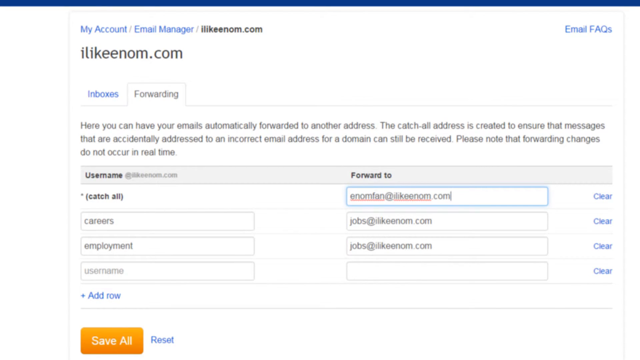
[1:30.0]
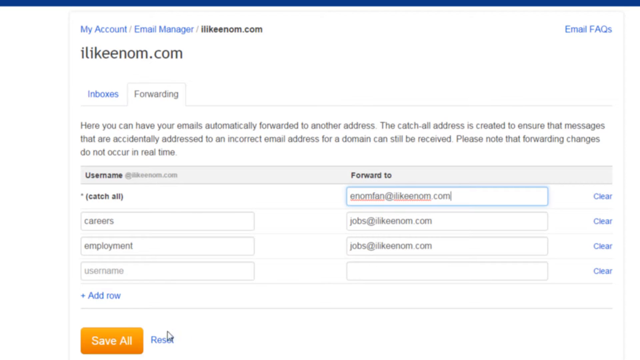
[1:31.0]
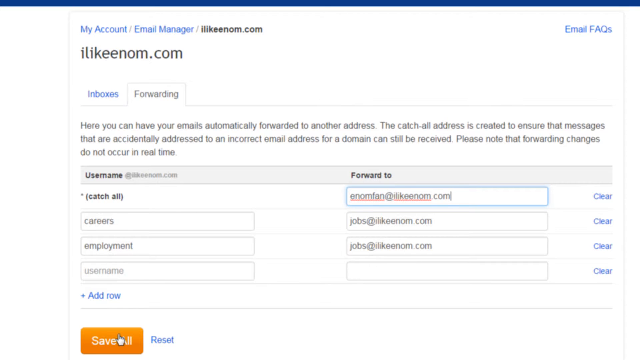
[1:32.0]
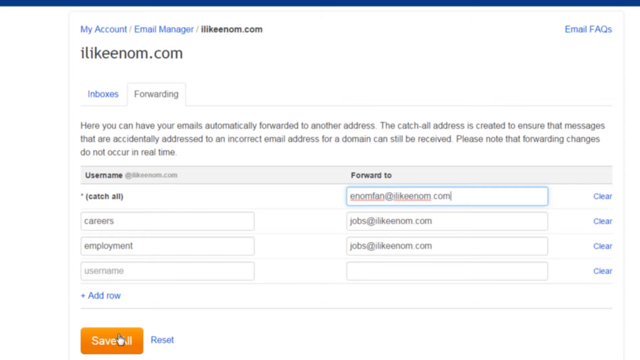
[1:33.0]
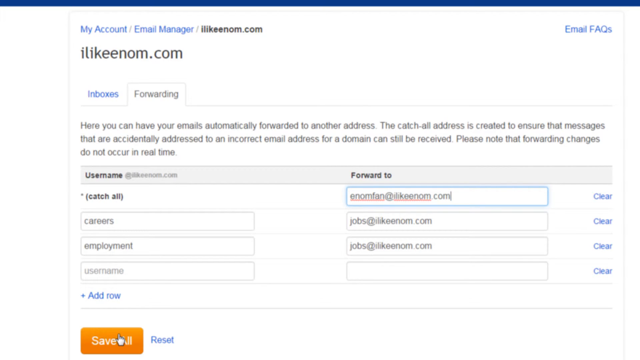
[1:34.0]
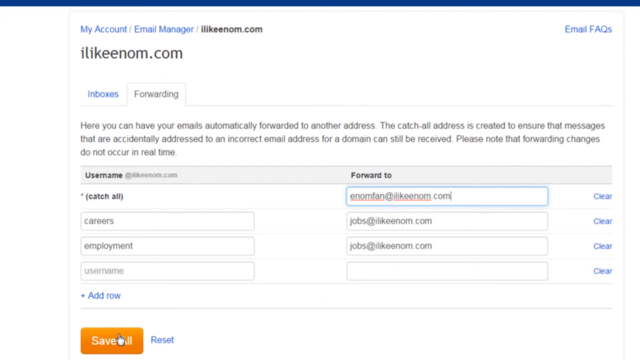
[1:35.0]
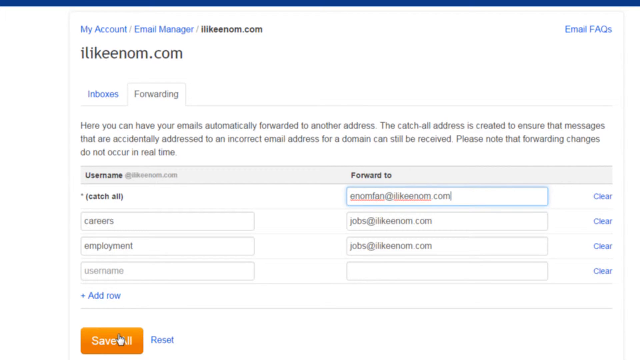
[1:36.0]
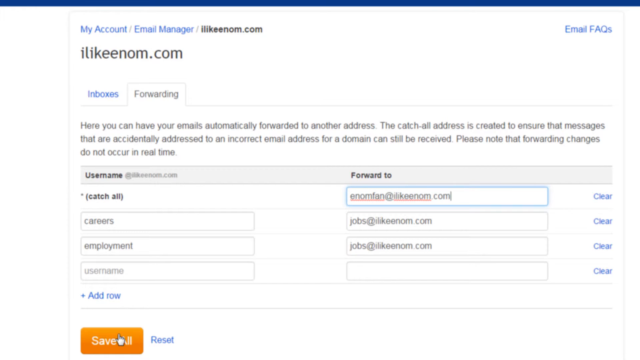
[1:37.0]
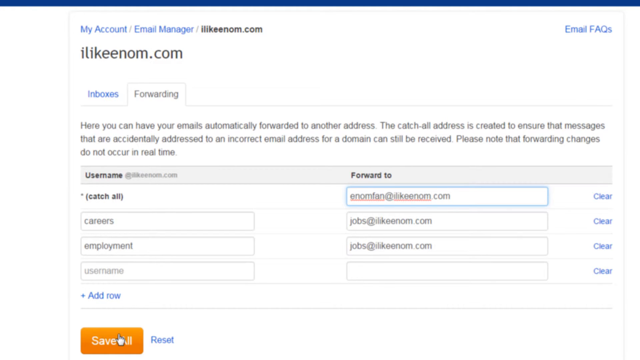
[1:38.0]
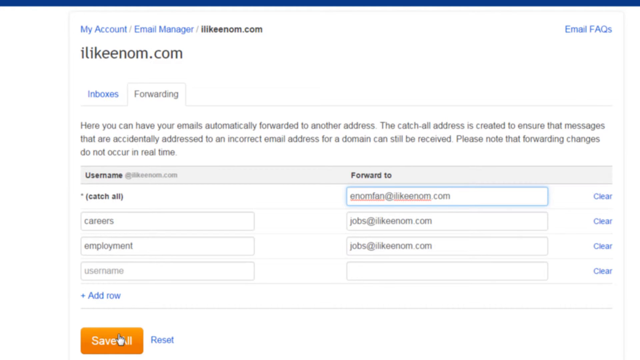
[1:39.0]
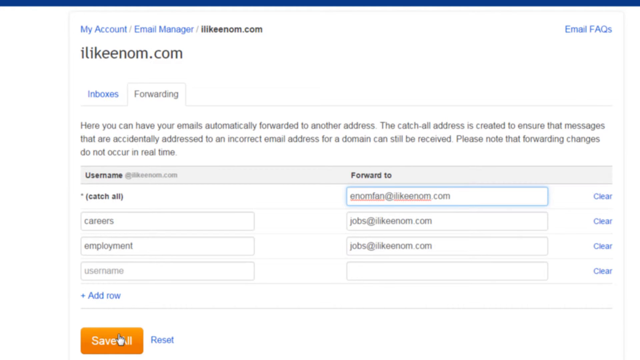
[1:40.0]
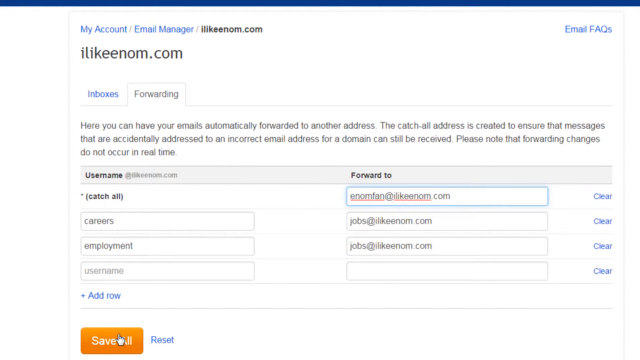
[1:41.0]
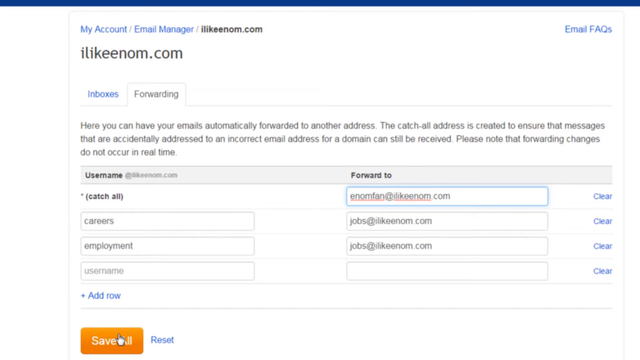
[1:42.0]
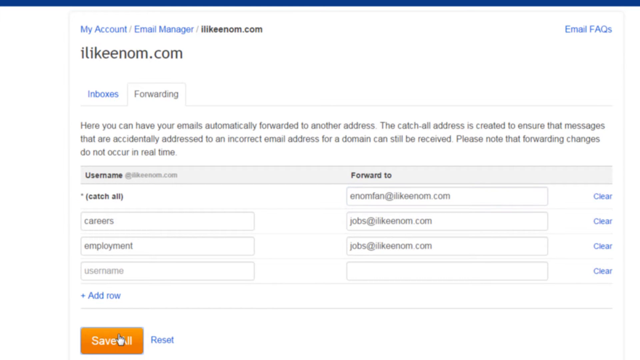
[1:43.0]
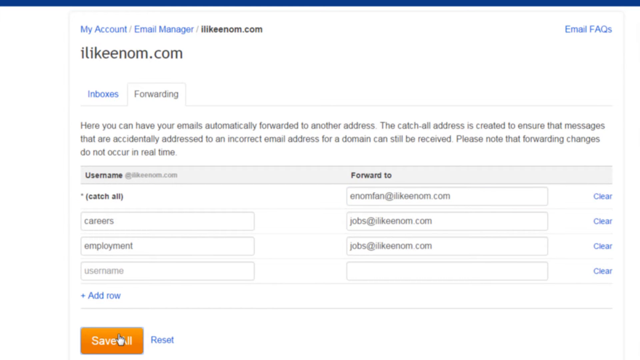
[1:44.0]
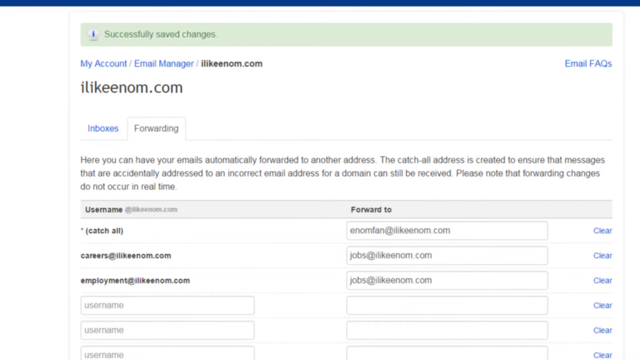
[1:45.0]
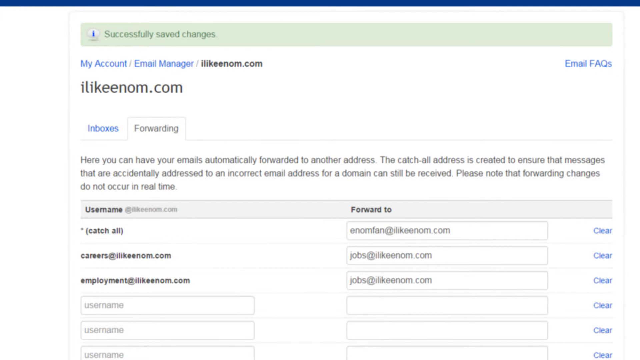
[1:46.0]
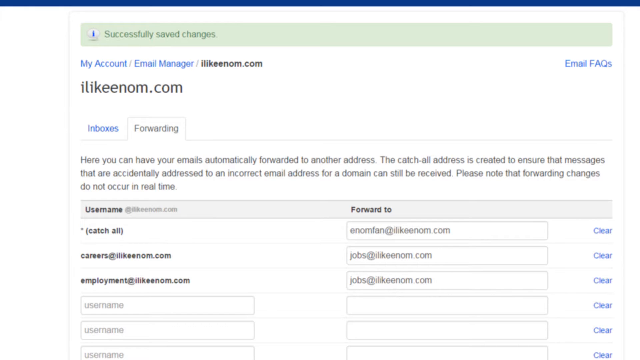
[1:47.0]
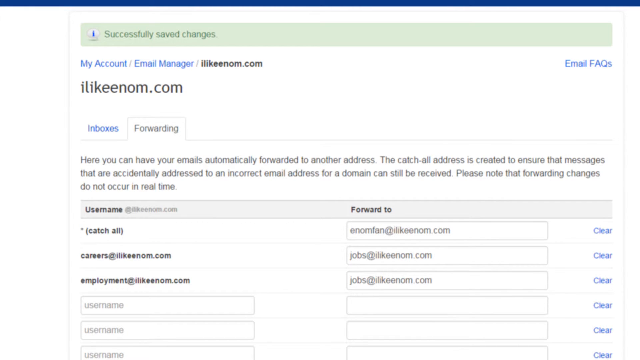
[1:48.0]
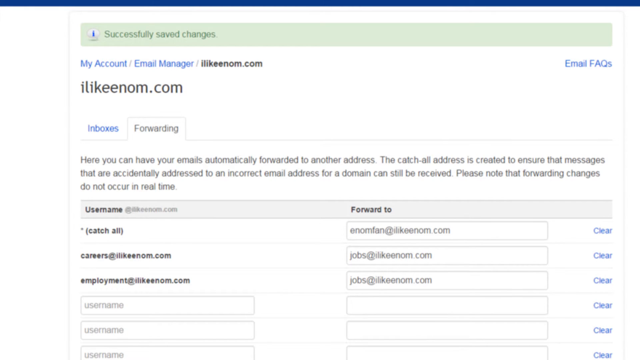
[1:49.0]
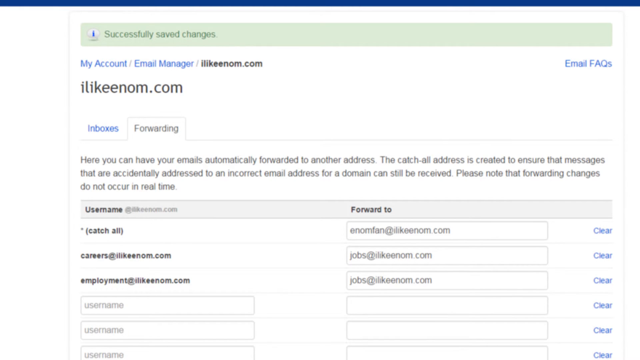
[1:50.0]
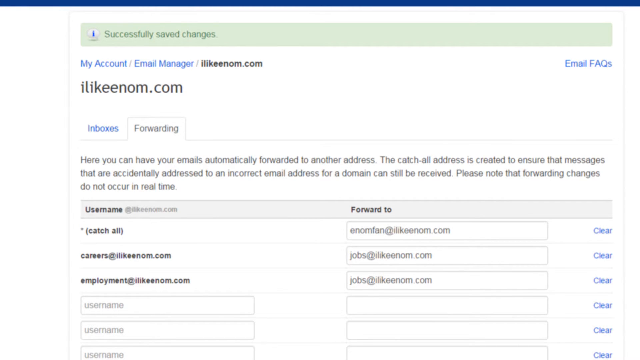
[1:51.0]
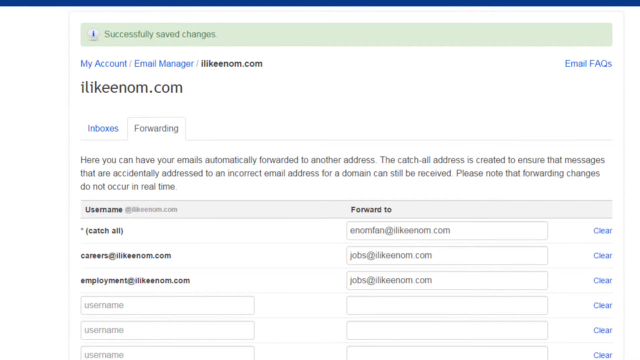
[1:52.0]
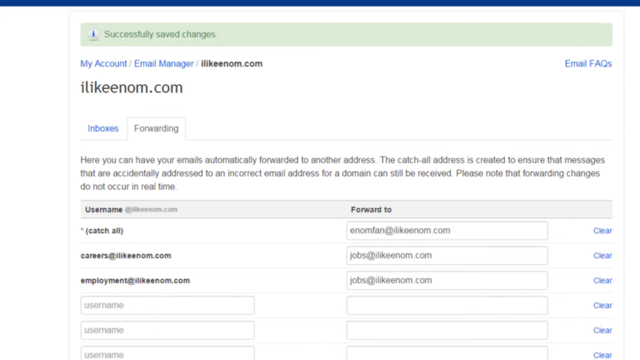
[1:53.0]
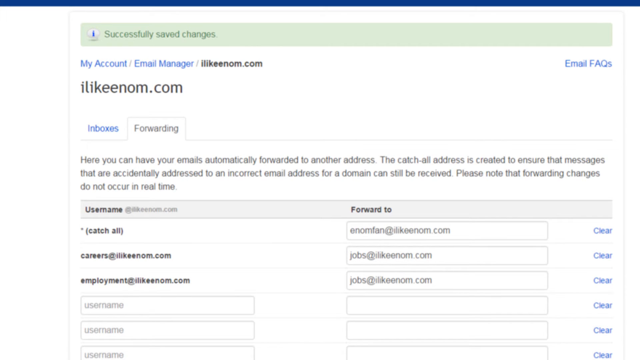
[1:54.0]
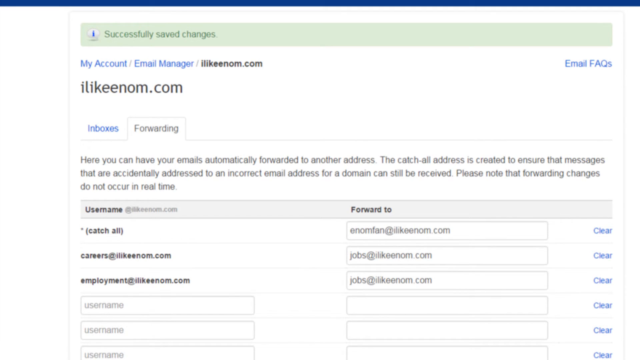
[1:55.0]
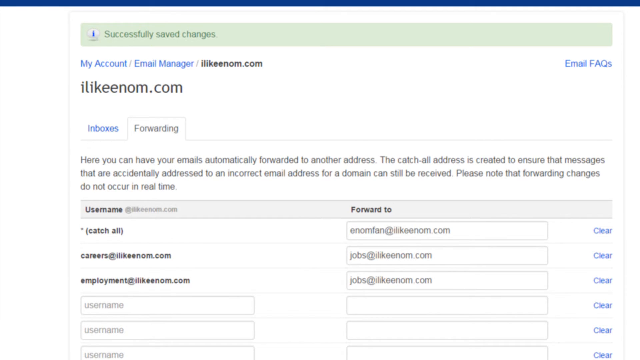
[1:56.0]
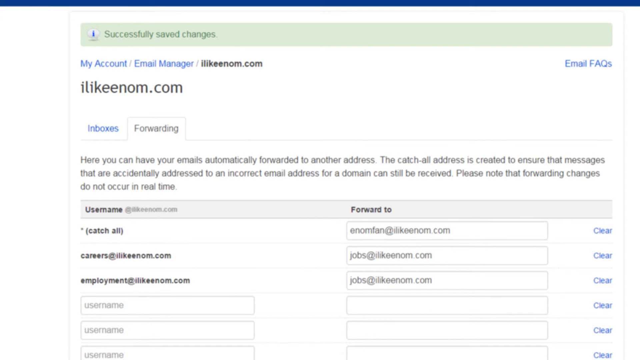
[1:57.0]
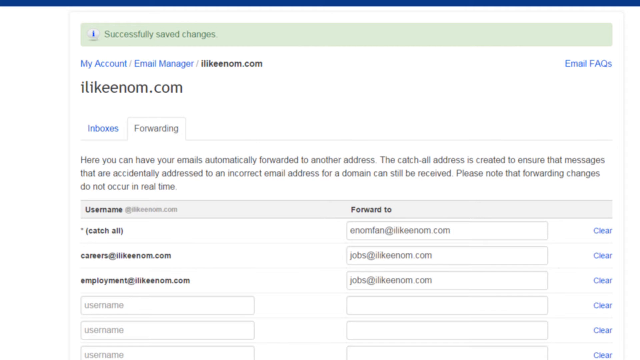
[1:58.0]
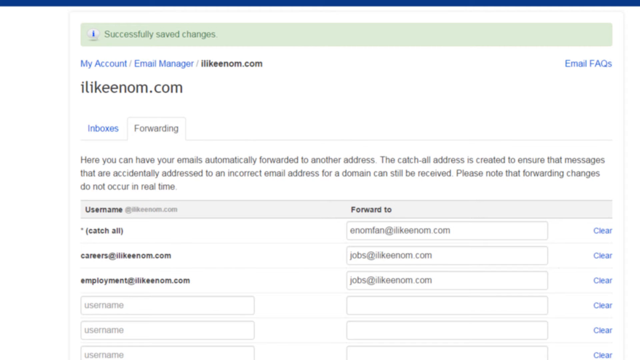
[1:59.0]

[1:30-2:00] A white screen is pulled up with "my account email manager" at the top and a website listed. Below that are tabs, one saying "Inboxes" and the other "Forwarding"; the Forwarding tab appears to be selected. Further down, a gray bar says "username" and "forwarding to," with boxes below those labels. The user fills out information, apparently putting email addresses into the forwarding to section, seemingly using a white arrow pointer to go over the different sections.